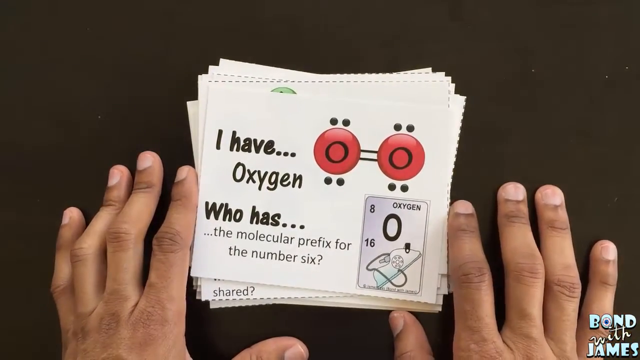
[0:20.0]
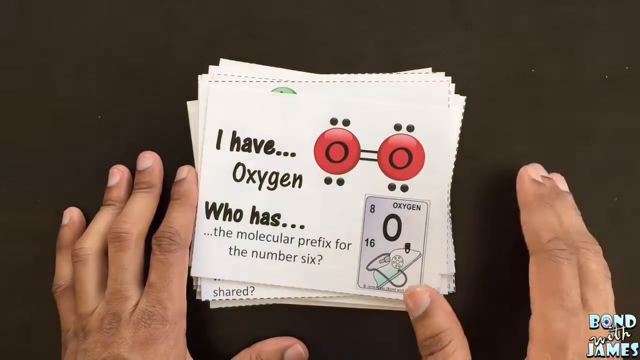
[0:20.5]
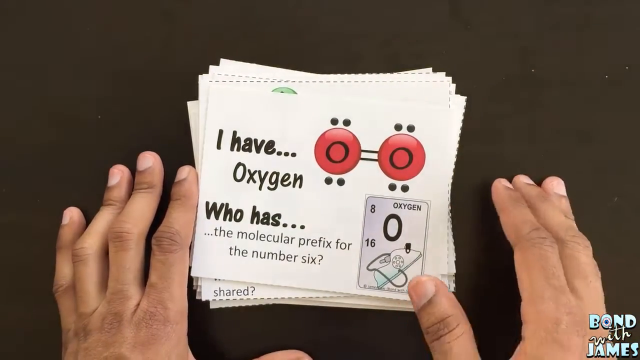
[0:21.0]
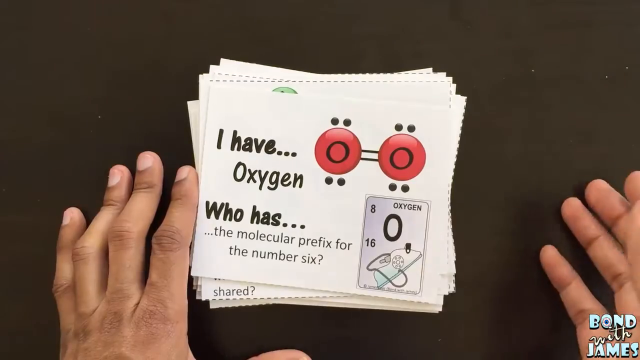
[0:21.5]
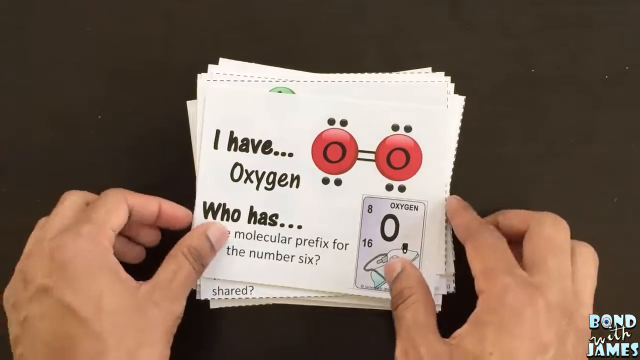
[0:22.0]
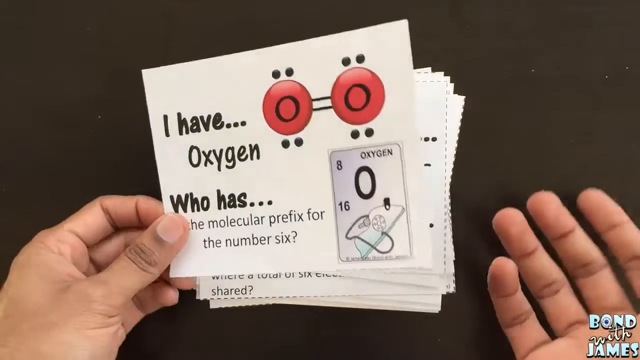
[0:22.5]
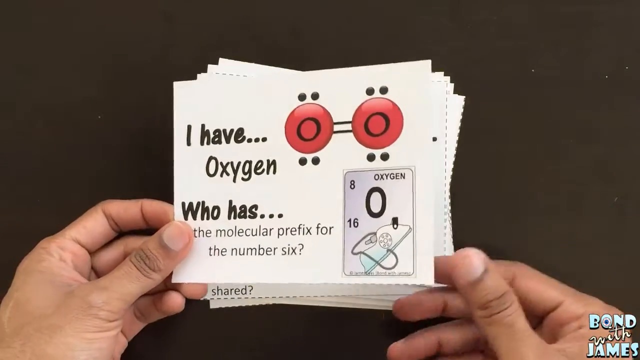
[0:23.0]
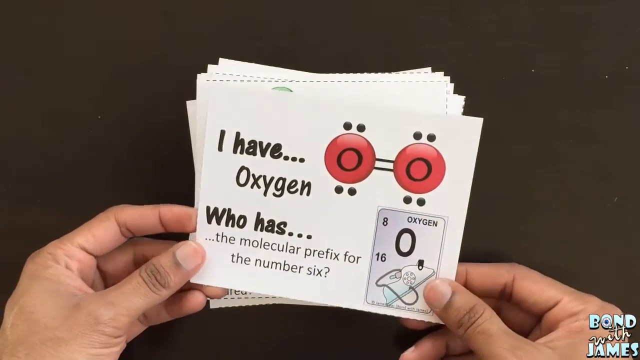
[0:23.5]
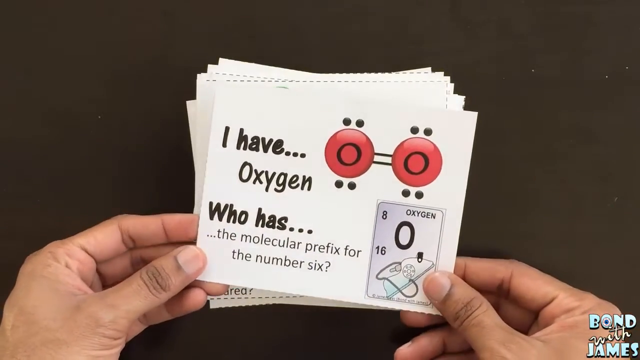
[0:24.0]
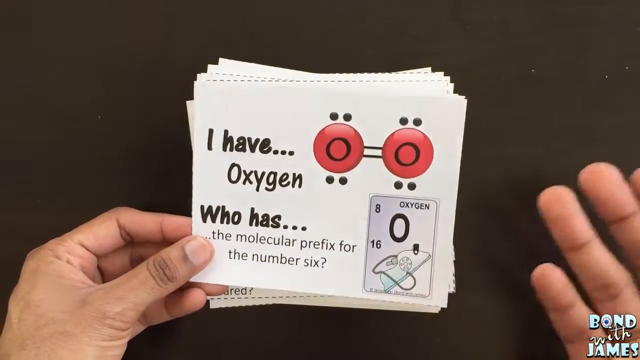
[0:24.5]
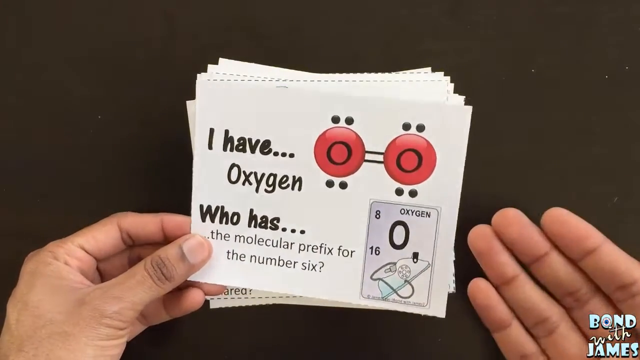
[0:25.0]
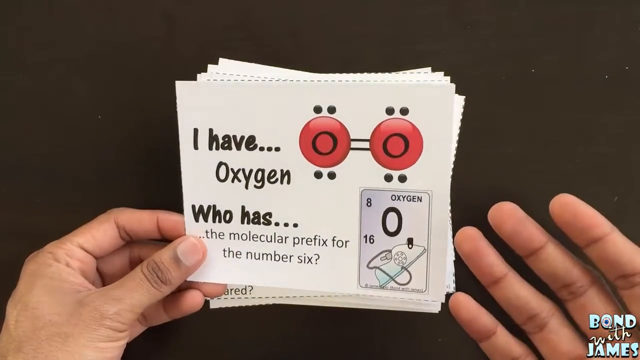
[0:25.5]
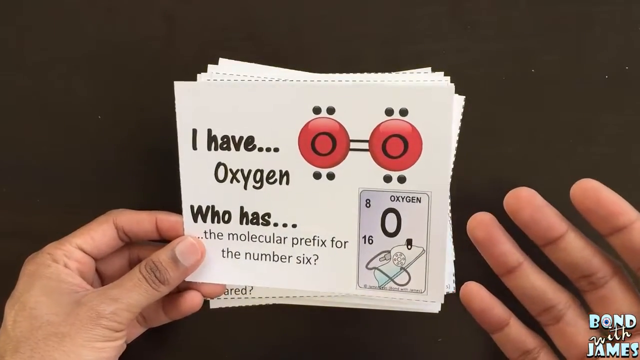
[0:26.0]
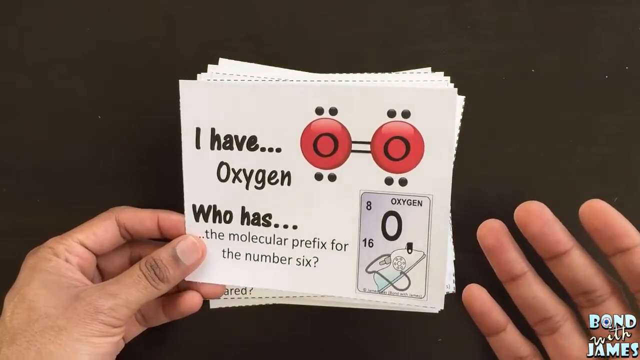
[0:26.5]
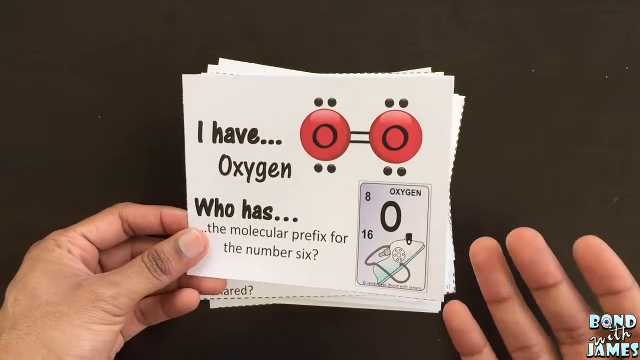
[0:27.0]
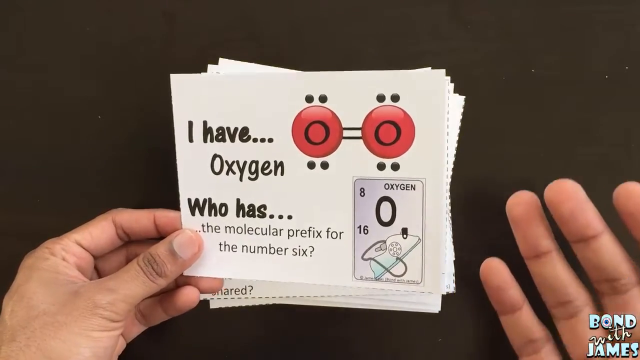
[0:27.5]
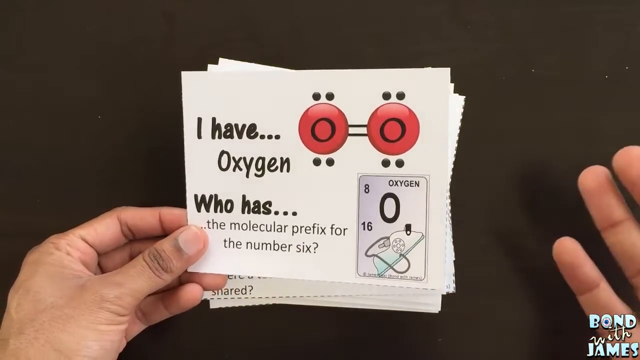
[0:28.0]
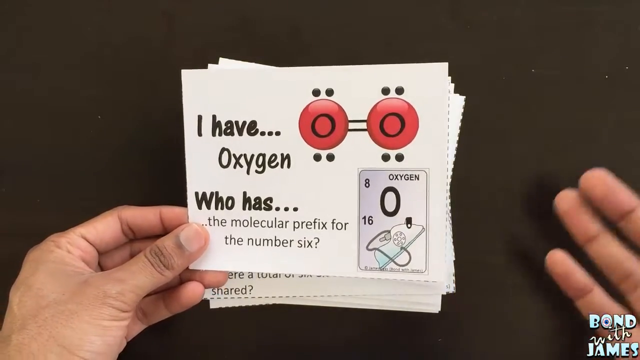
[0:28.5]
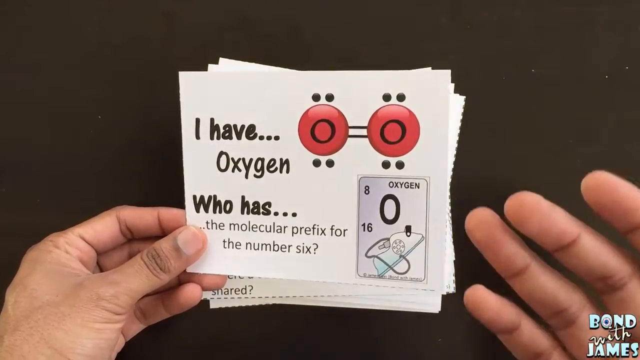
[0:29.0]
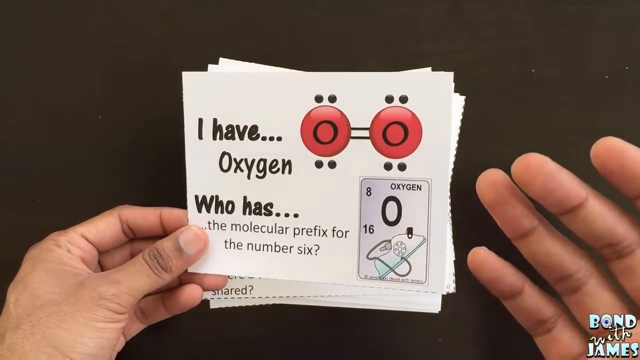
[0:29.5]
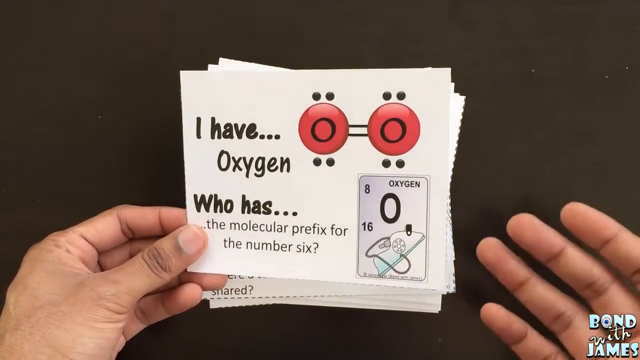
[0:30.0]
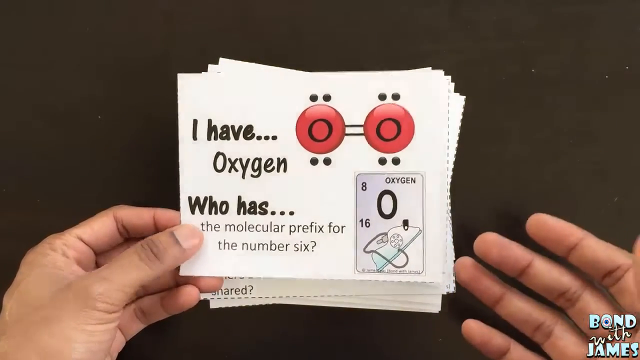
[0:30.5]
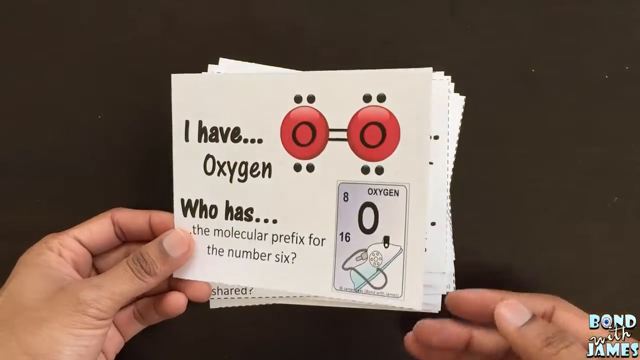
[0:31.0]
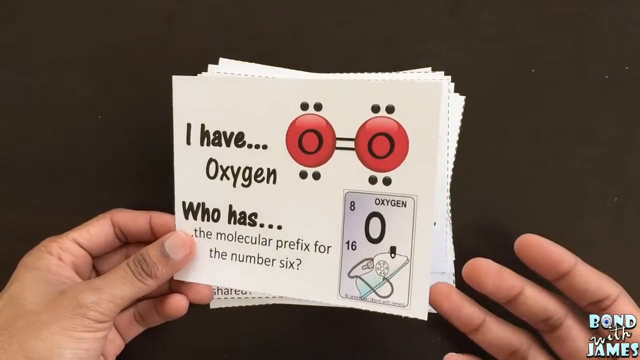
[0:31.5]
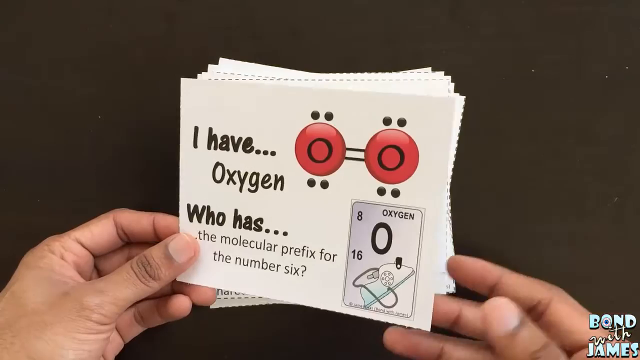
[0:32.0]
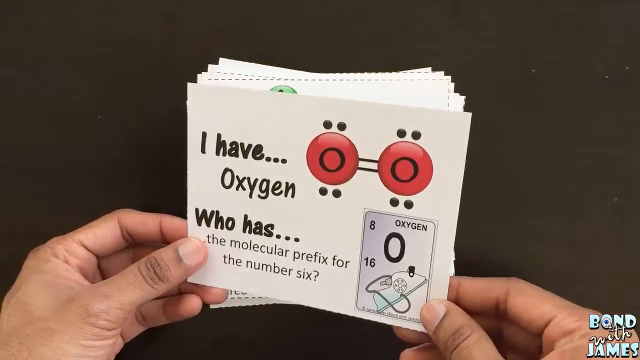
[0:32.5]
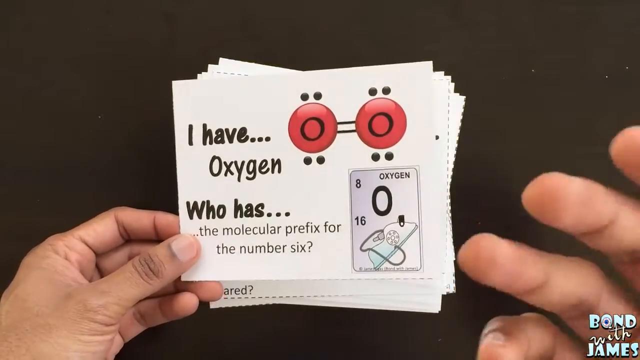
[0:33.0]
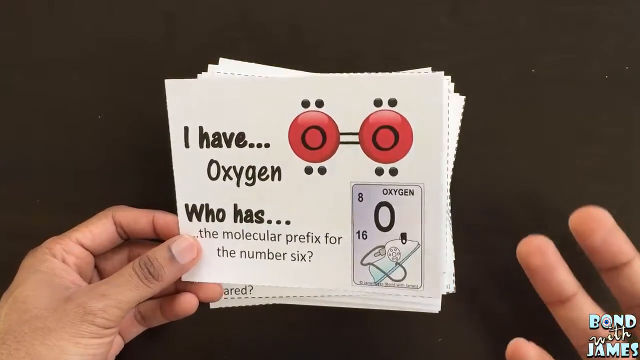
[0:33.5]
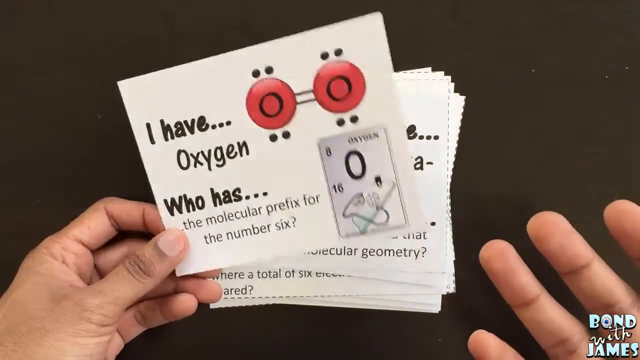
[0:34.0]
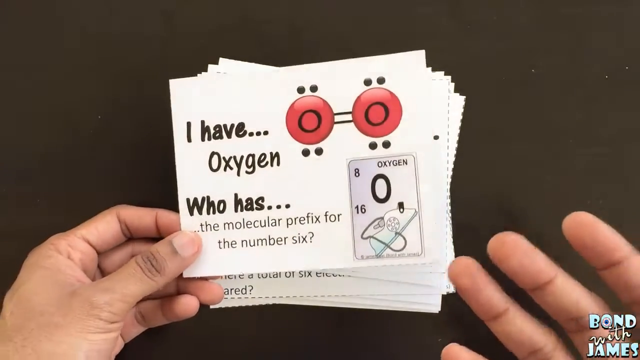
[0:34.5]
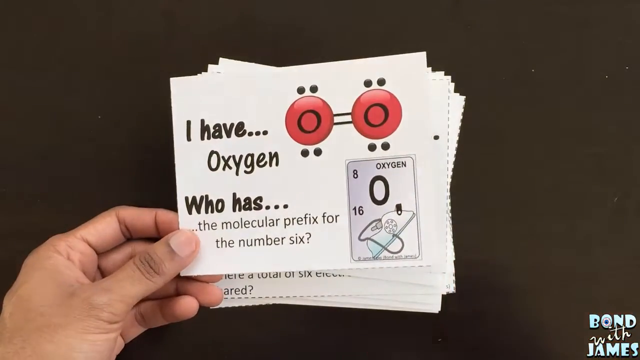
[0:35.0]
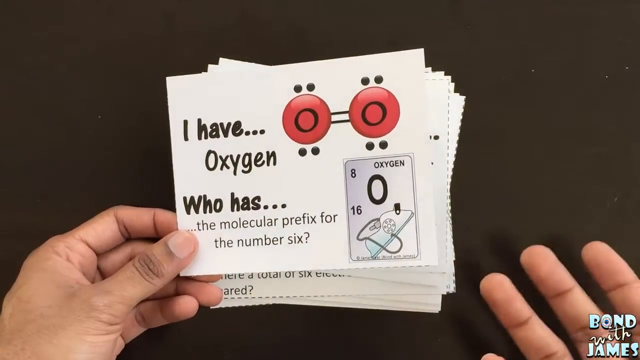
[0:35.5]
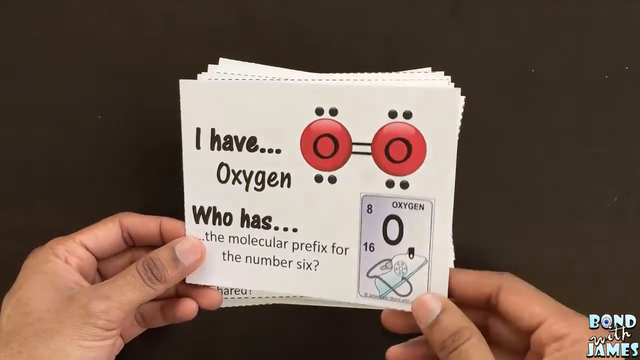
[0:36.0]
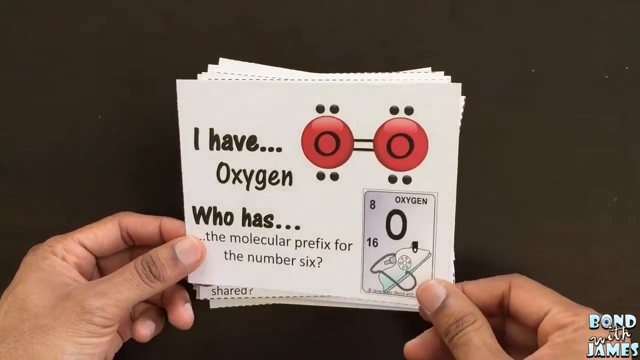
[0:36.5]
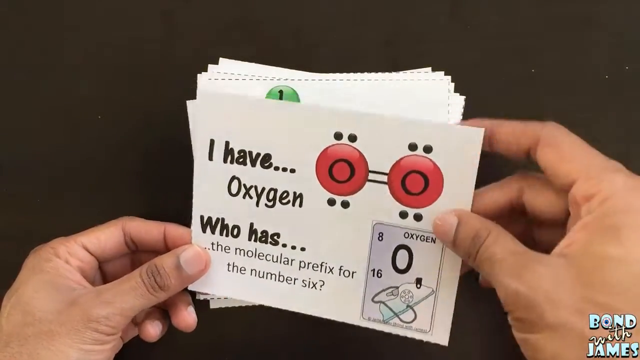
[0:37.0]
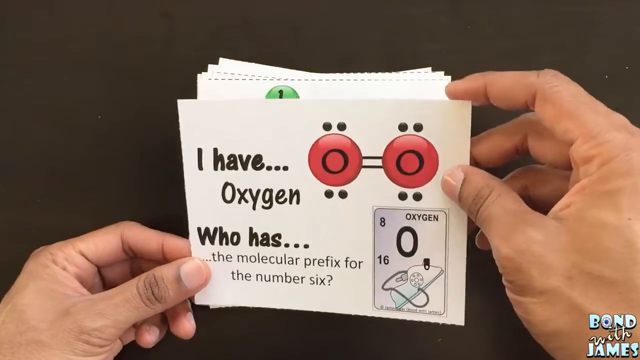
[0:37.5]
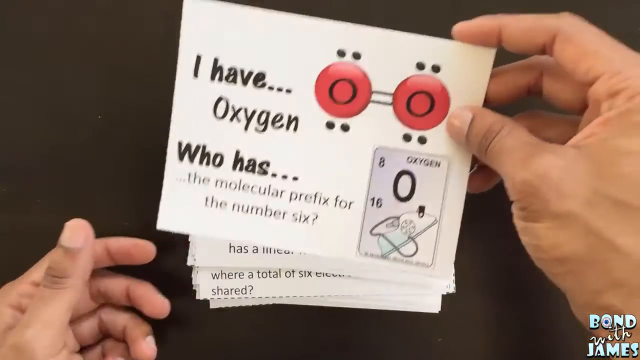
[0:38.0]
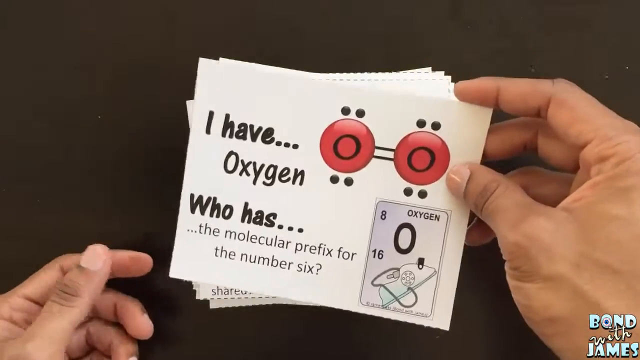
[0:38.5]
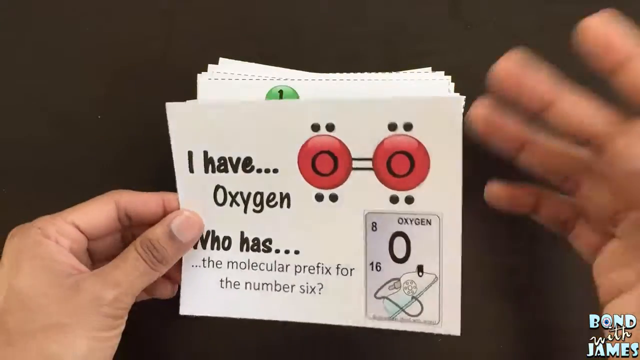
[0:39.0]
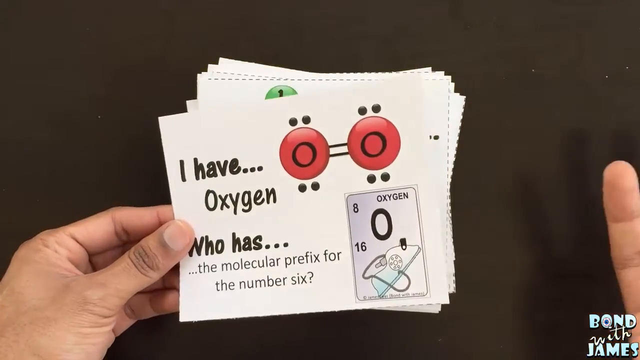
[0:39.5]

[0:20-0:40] The person picks up a card and is probably speaking, but their face is not visible. Holding the card, they make gestures with their right hand. The card is white with black writing, and there is a molecular symbol in red with white dots, two at the top and two at the bottom of each molecular picture. On the card is another box that looks like another card, with "oxygen" written on it along with the numbers 8 and 16. The person looks through the card, gestures with their hands, and brings the cards closer to the camera. They keep gesturing, and beneath the card they are holding is another card, which is green and also has a molecular picture.